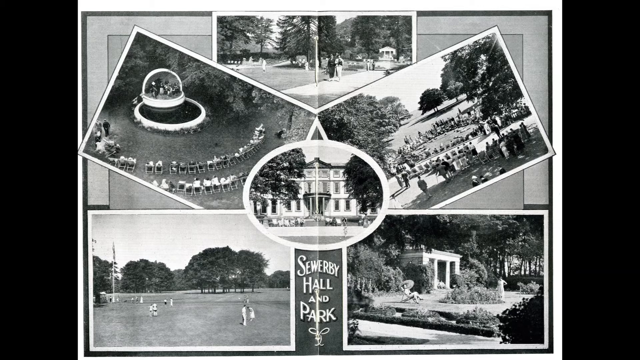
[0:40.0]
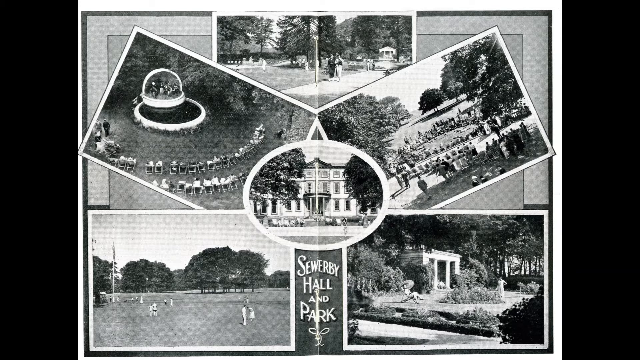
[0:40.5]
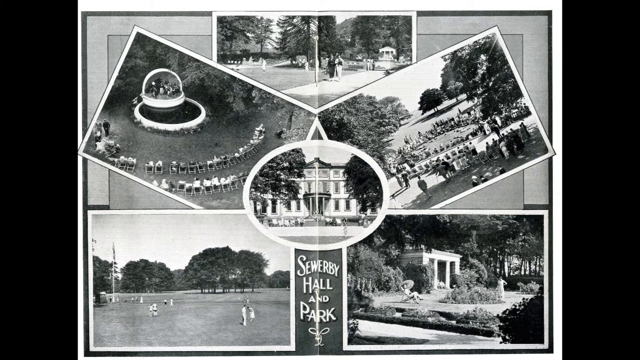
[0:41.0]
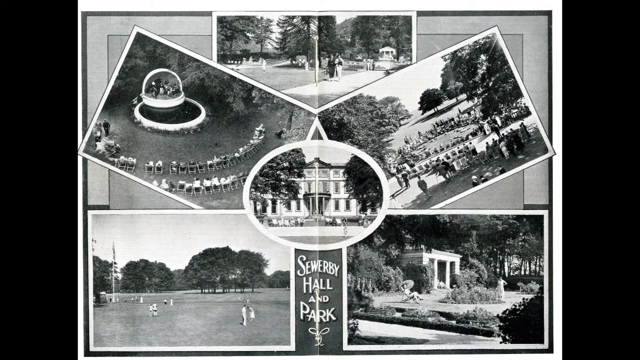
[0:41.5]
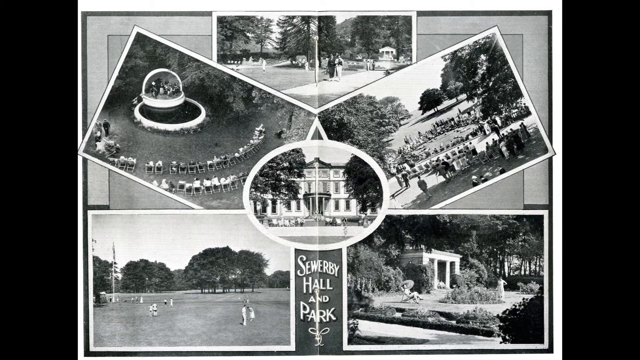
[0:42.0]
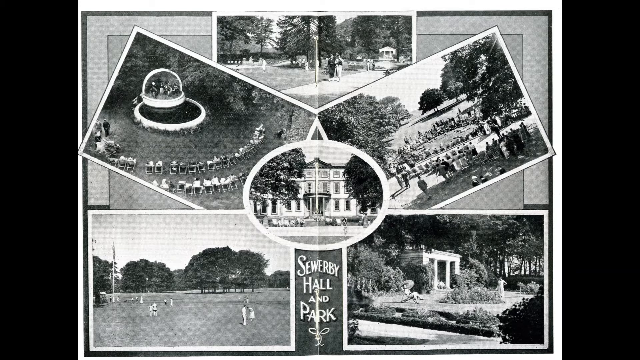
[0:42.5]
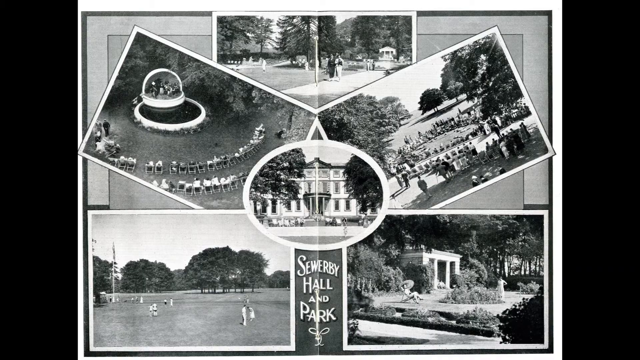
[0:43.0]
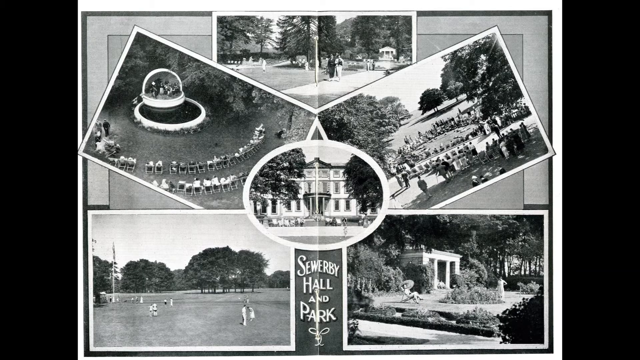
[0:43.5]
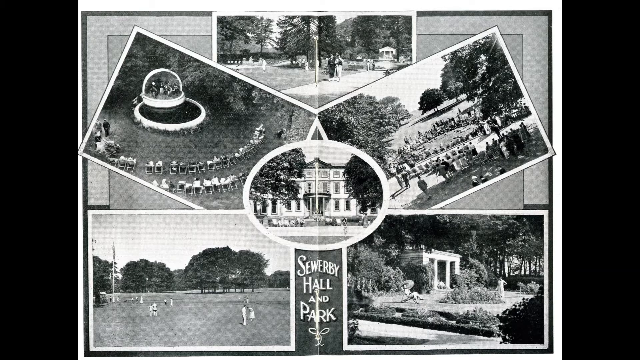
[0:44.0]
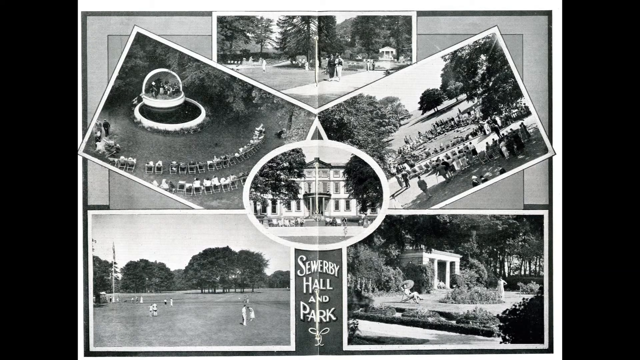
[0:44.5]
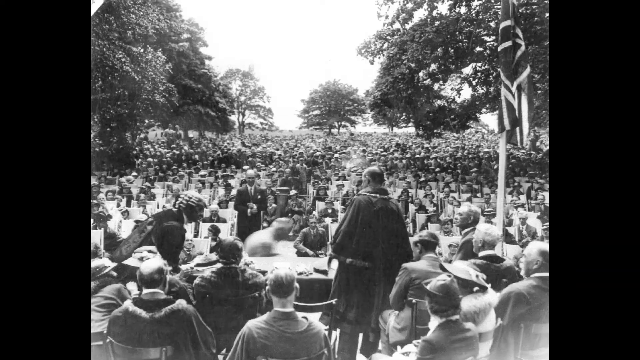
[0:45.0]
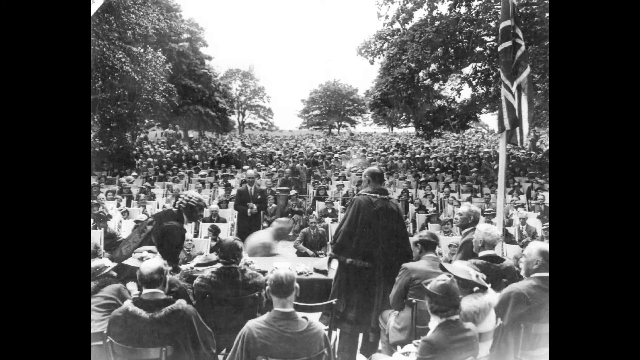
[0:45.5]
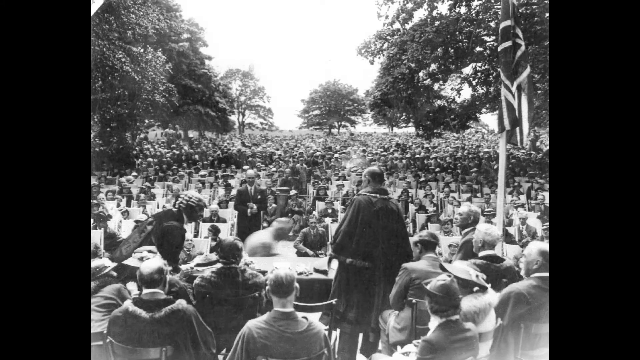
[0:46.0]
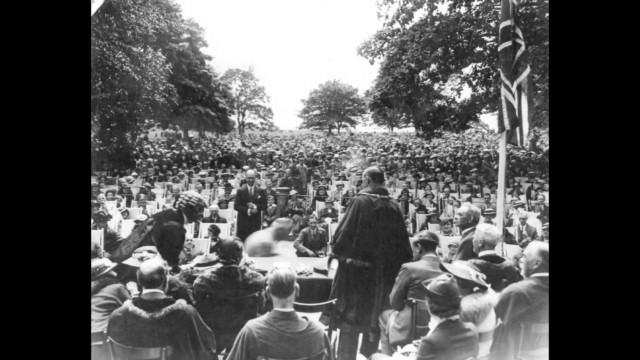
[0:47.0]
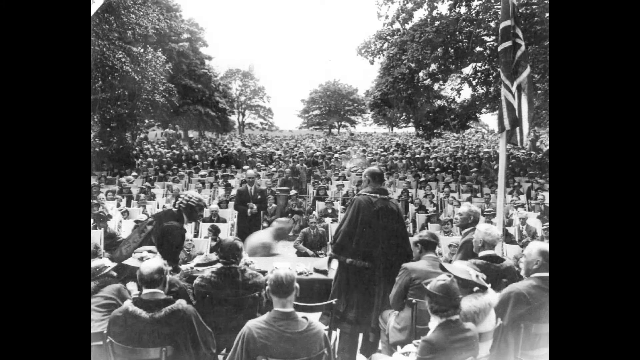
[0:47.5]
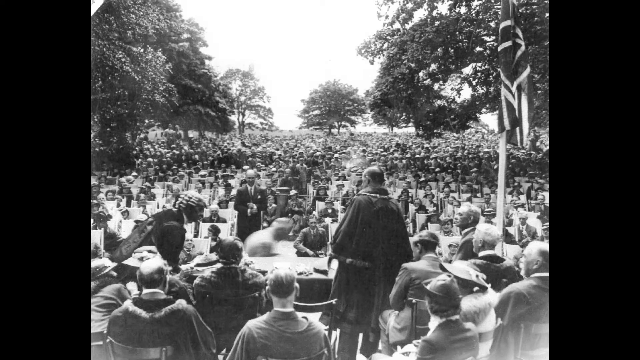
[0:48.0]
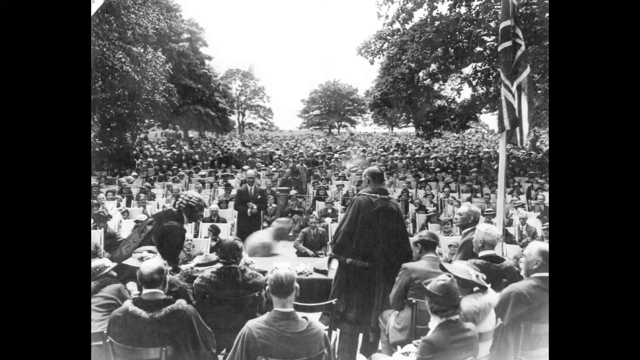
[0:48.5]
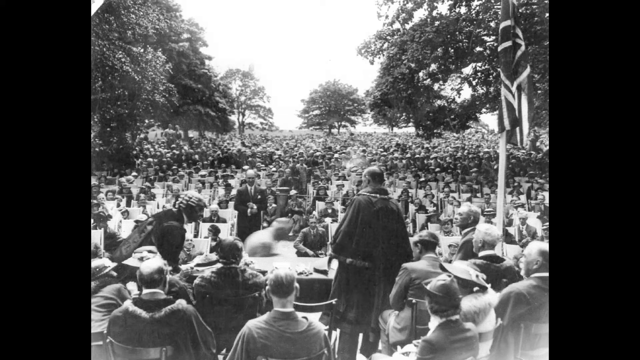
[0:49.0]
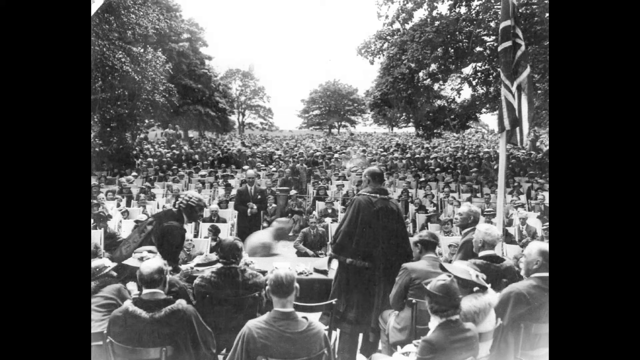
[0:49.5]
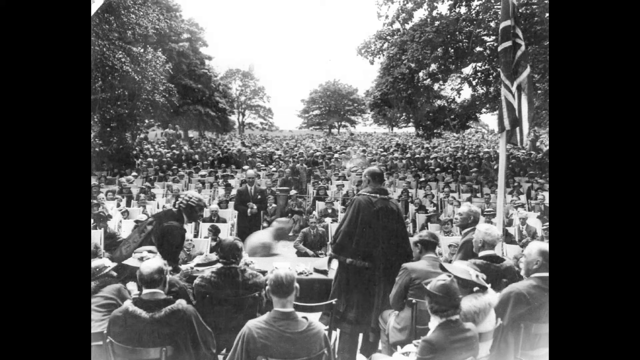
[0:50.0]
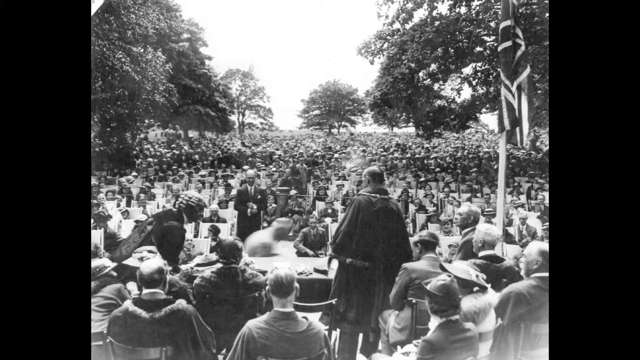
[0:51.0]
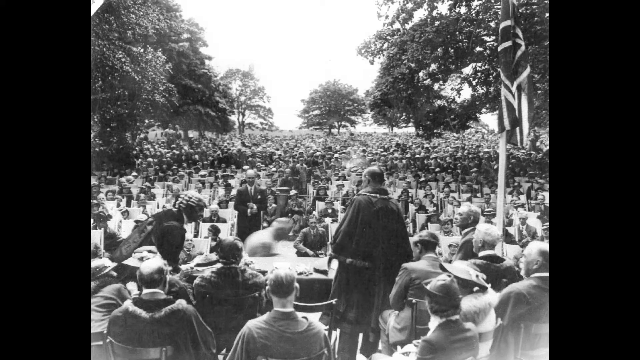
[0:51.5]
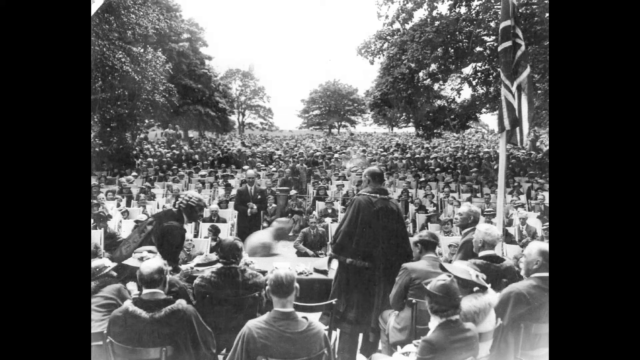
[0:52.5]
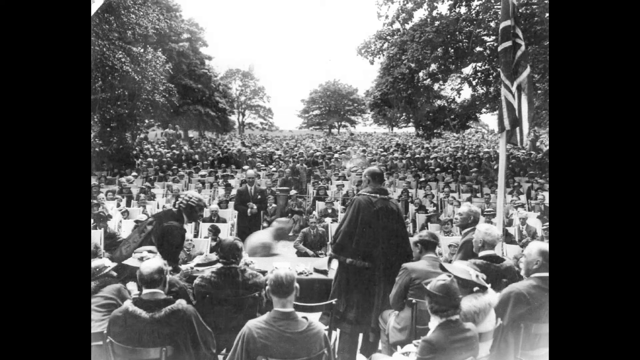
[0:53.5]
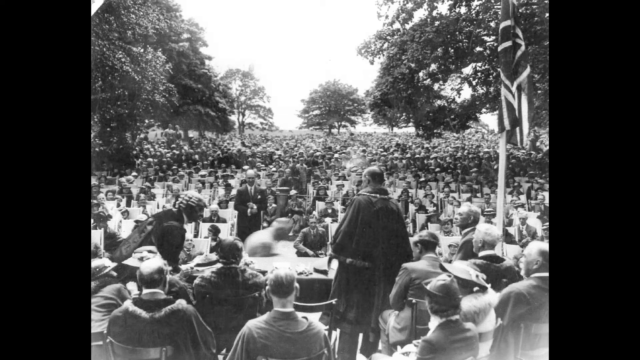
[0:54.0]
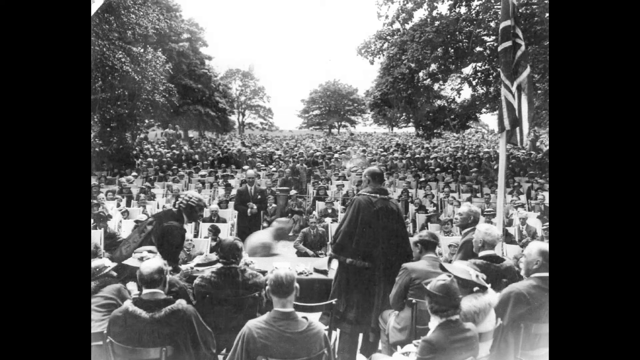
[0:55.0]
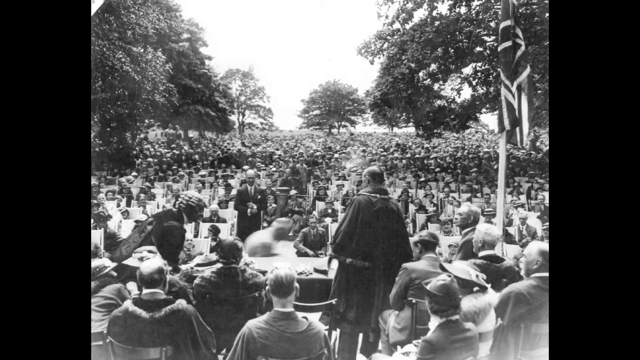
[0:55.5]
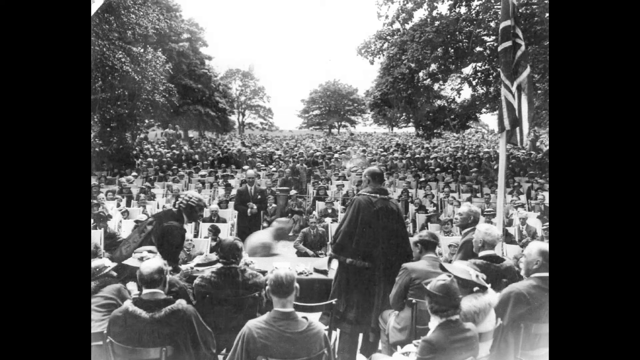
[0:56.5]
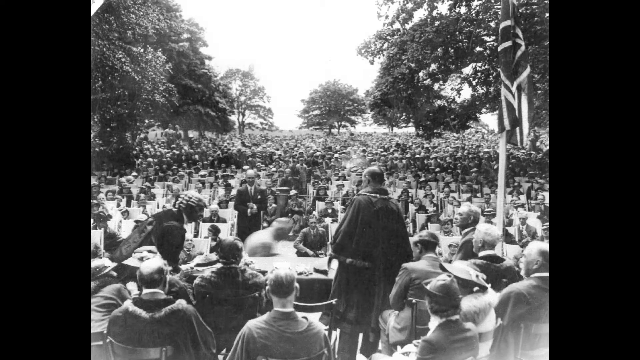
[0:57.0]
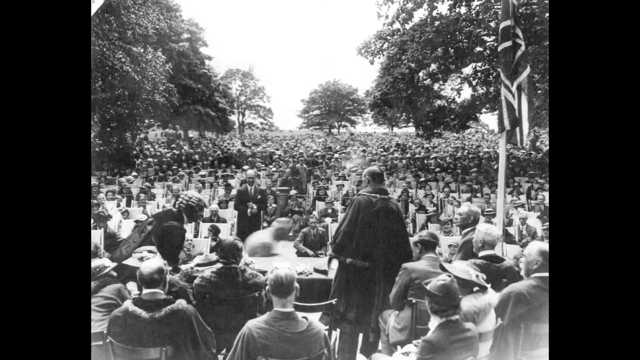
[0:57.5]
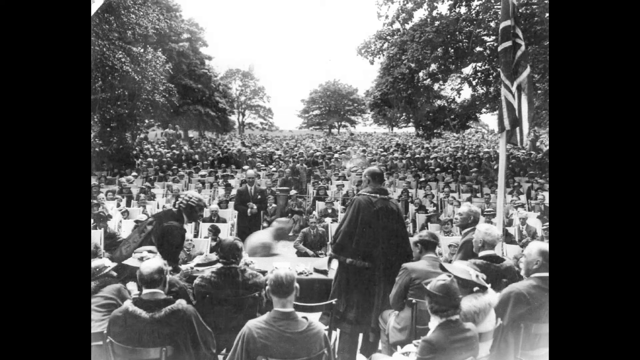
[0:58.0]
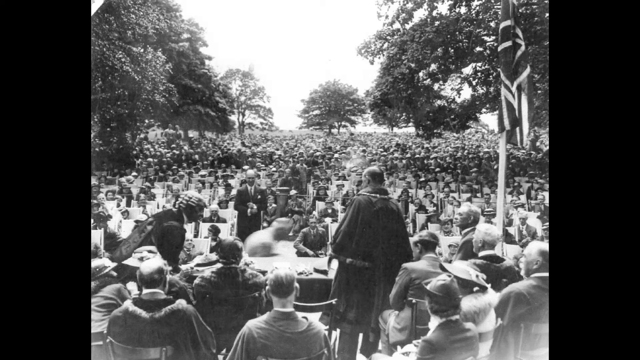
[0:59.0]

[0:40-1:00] Black-and-white pictures of Seward-Burr Hall and Park continue, six pictures in total. The main building, the hall, is in the center, with park areas in the bottom left and right. The center left and right are also park areas; the center left is the fountain area where the band played. This old picture is taken from above, and it still shows a band, along with two rows of chairs forming half arcs around the fountain and the band. At the very top is another picture that seems to show a fountain area in the park. Then a picture shows a big group of people in the park, perhaps a protest or some sort of important meeting. One robed man, who looks like a monk or almost like a prisoner, is standing up. Everyone else around him is sitting down, except for one other man across from him who seems to be his opposite: the monk-like man looks poor and raggedy, while the man across from him looks like a rich businessman.